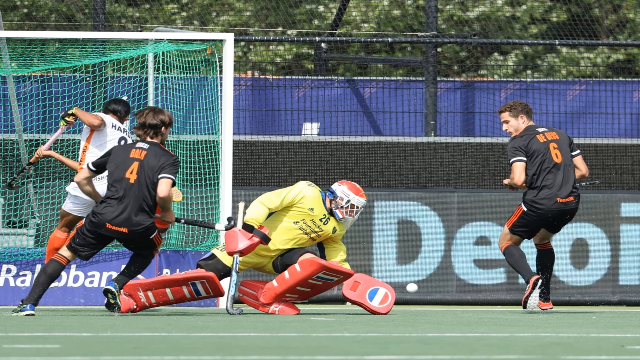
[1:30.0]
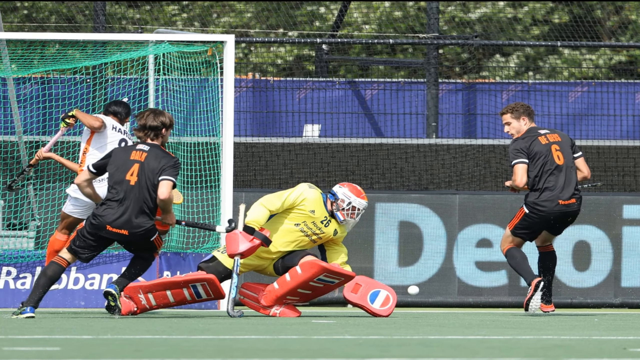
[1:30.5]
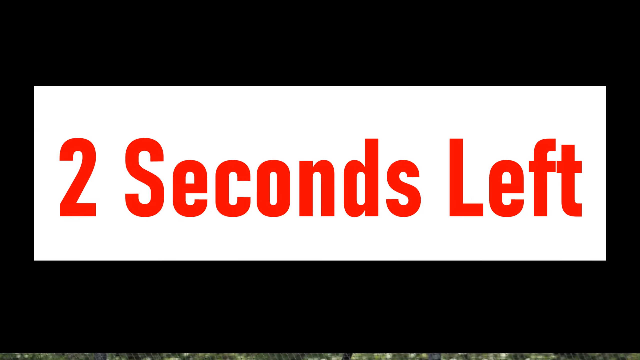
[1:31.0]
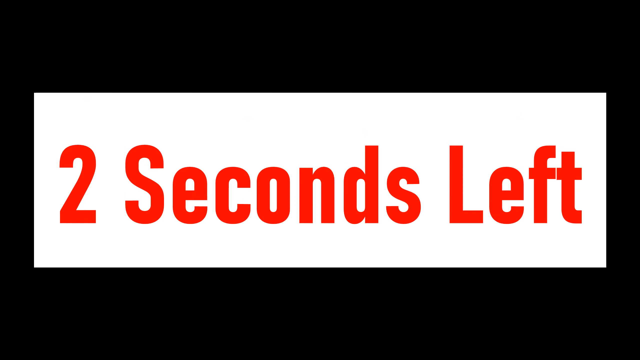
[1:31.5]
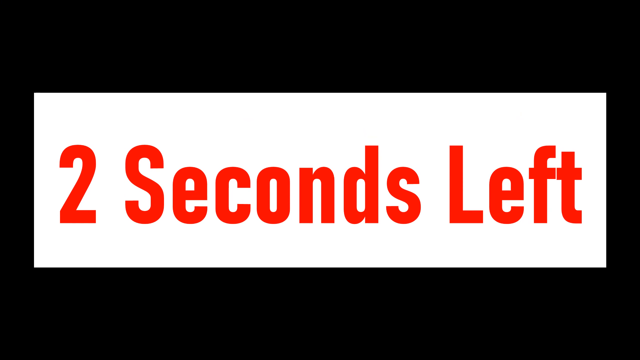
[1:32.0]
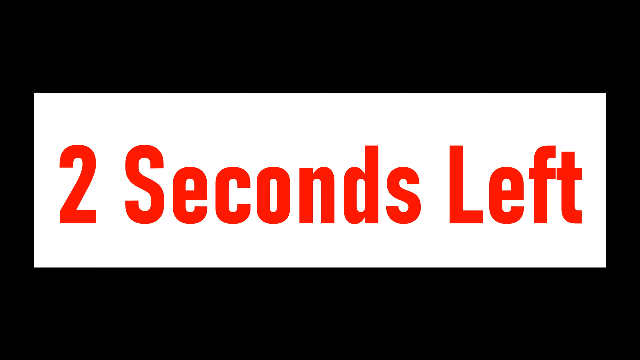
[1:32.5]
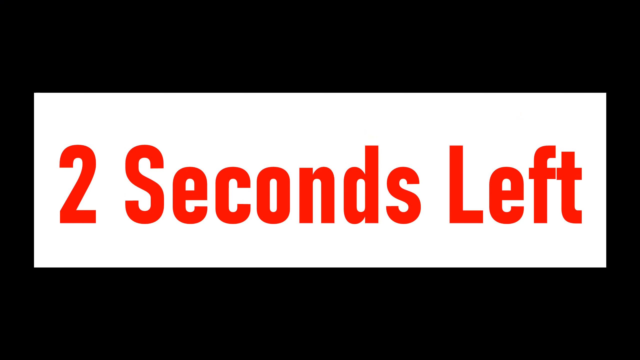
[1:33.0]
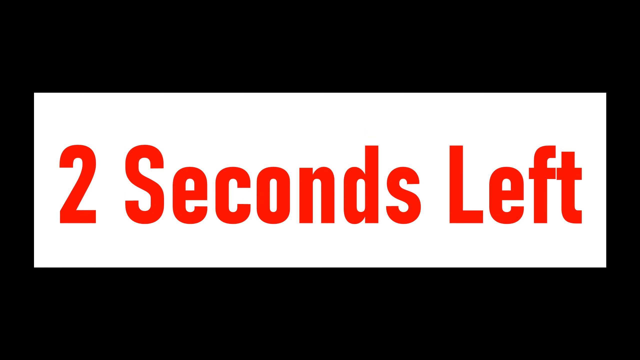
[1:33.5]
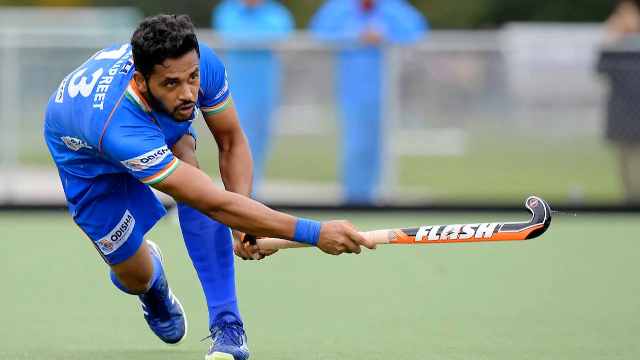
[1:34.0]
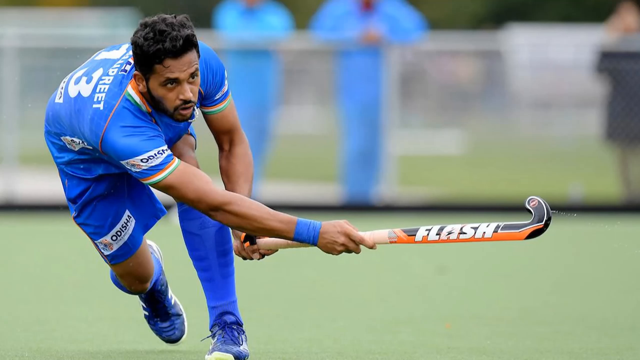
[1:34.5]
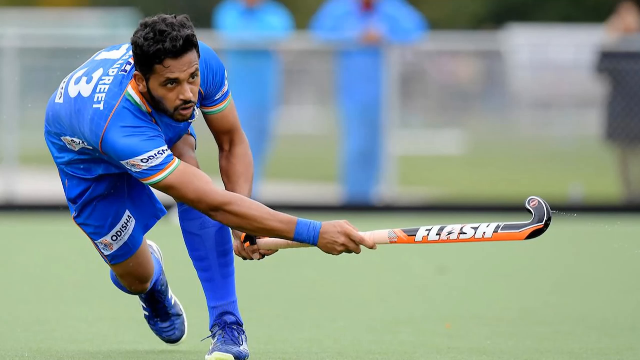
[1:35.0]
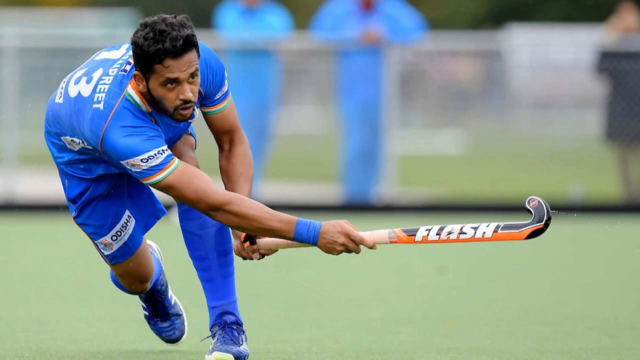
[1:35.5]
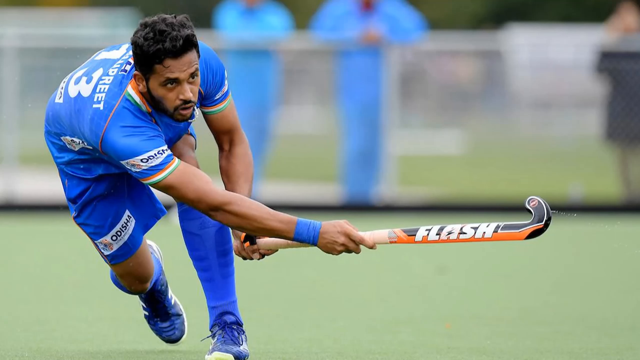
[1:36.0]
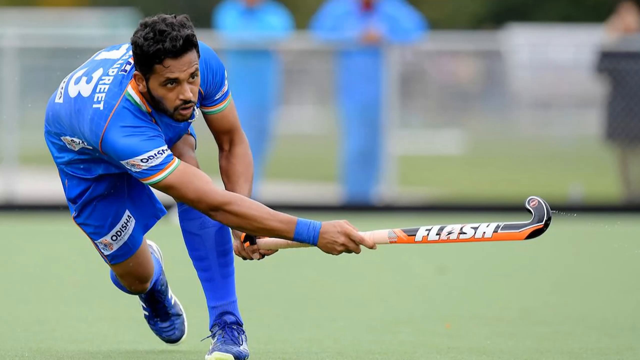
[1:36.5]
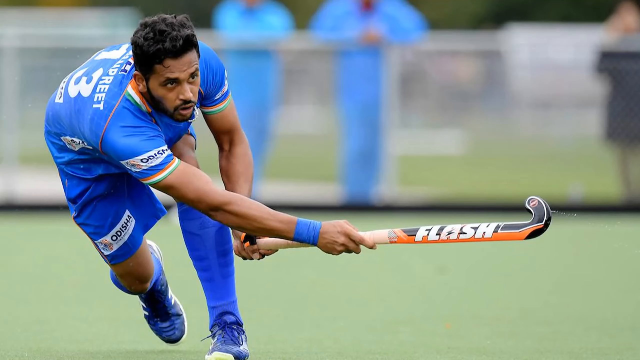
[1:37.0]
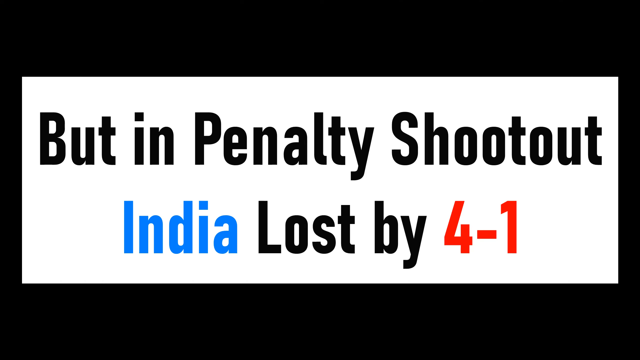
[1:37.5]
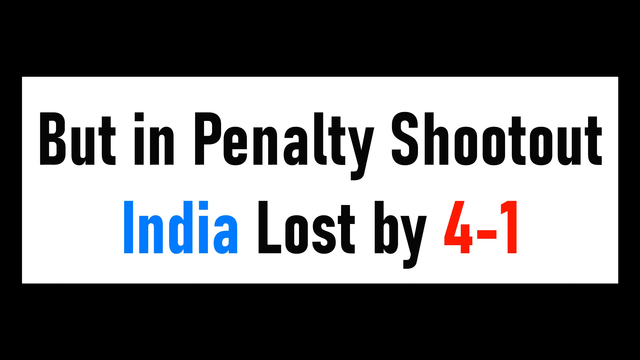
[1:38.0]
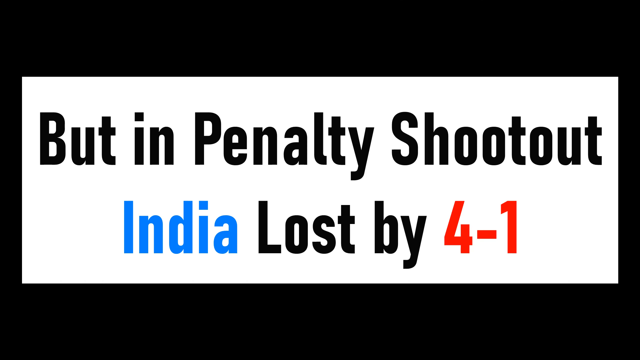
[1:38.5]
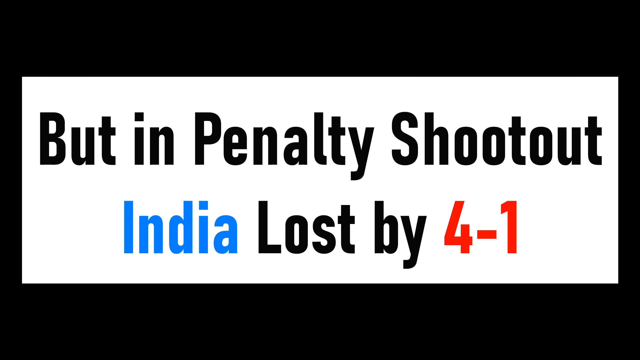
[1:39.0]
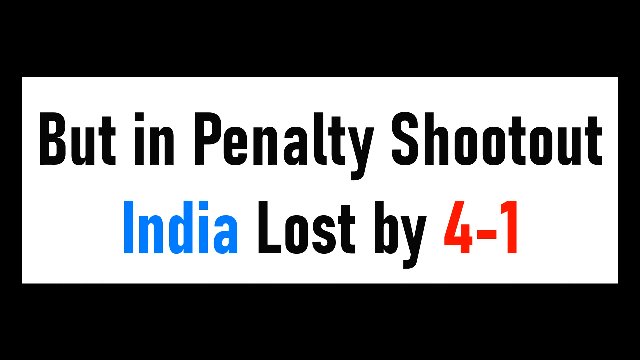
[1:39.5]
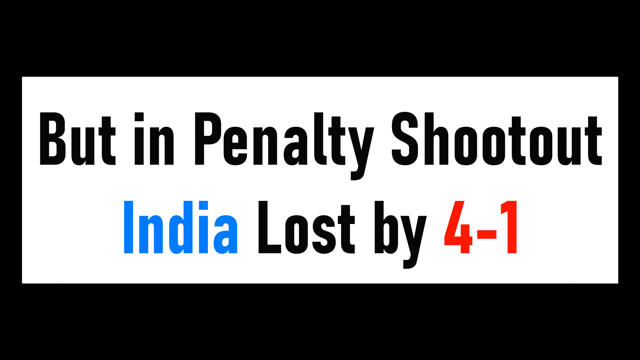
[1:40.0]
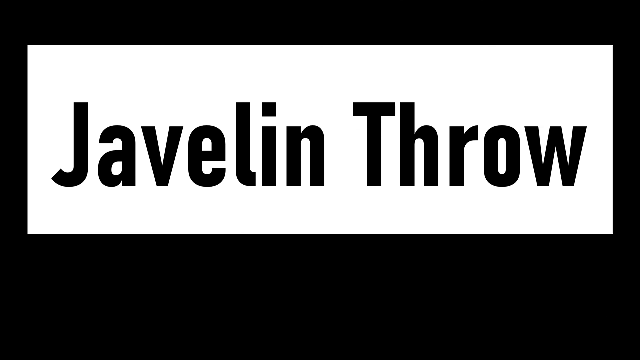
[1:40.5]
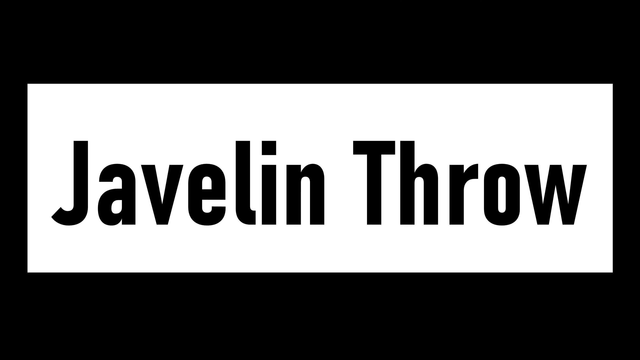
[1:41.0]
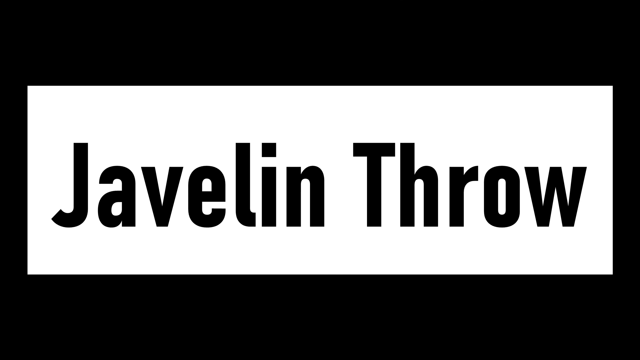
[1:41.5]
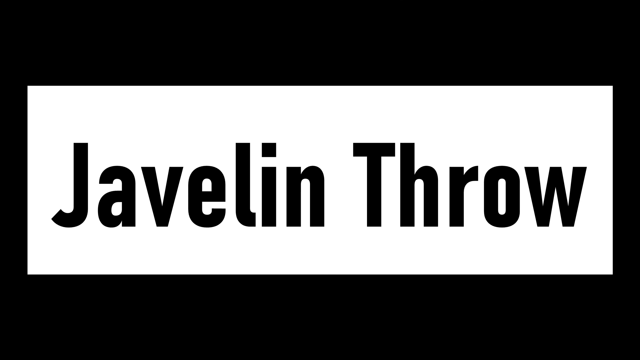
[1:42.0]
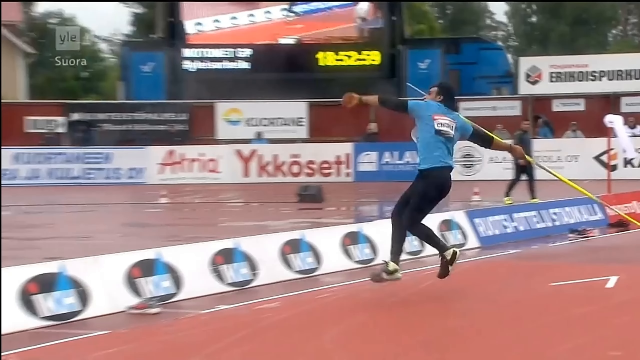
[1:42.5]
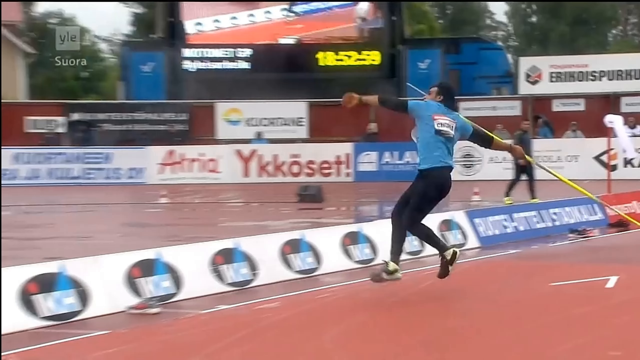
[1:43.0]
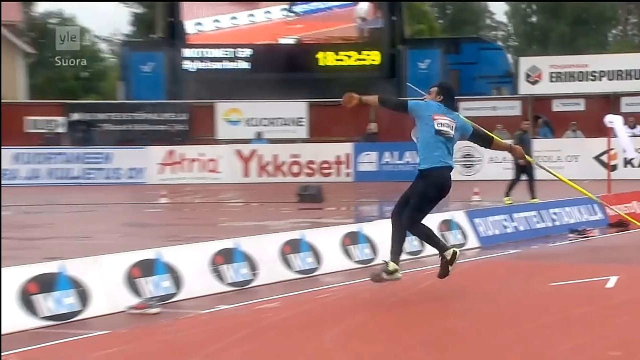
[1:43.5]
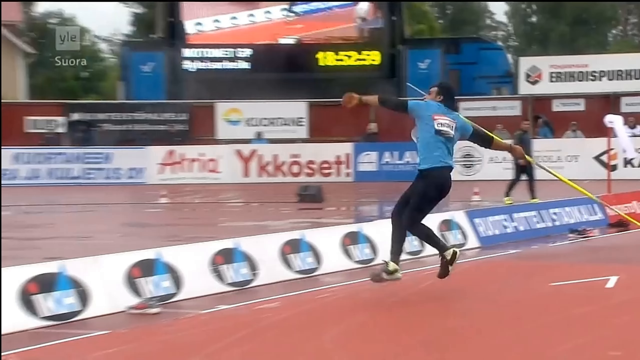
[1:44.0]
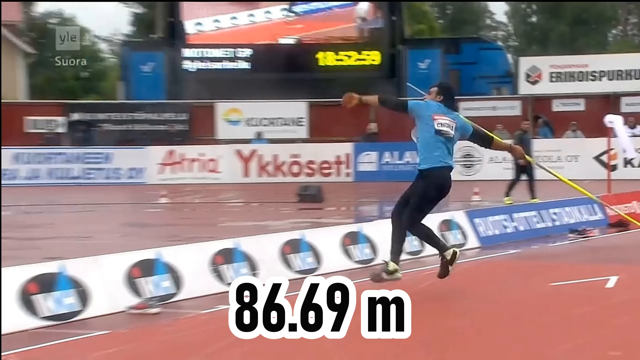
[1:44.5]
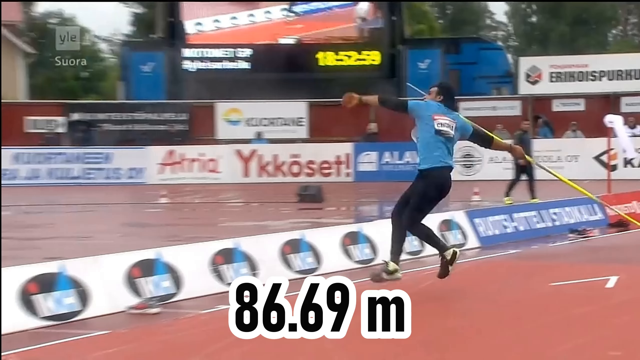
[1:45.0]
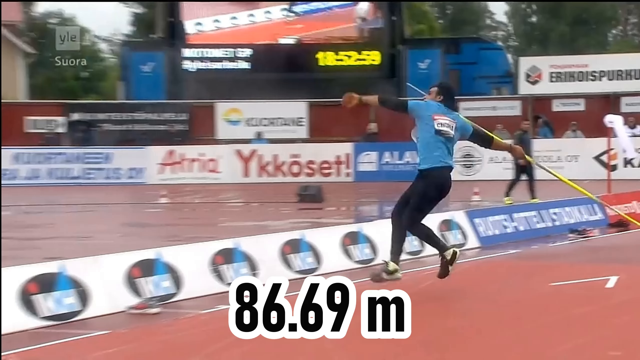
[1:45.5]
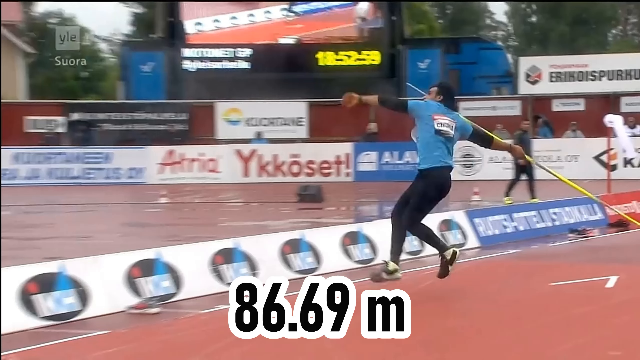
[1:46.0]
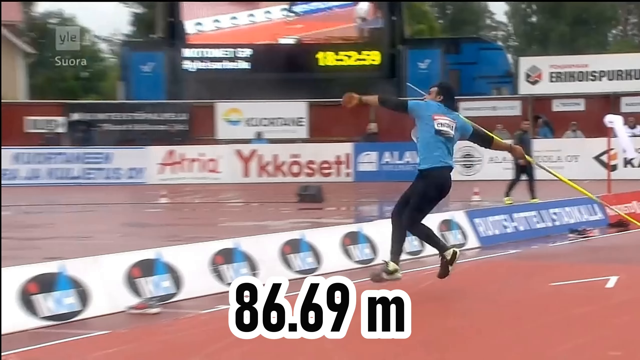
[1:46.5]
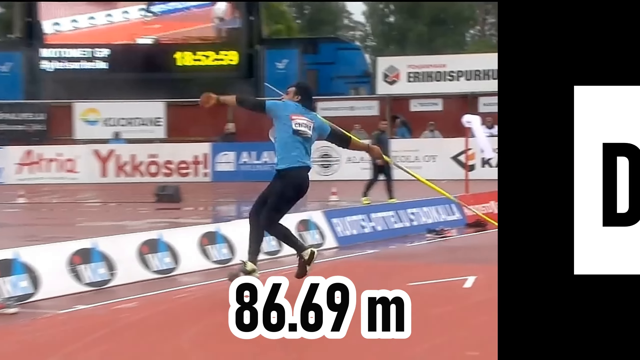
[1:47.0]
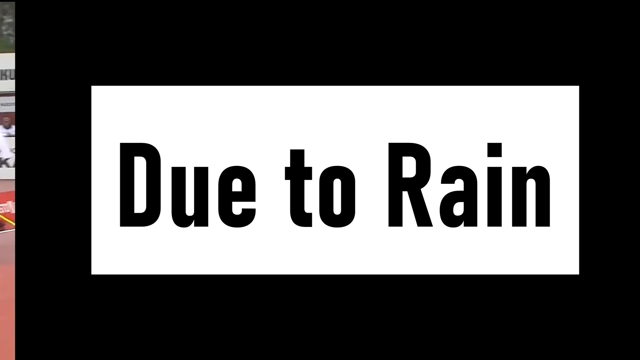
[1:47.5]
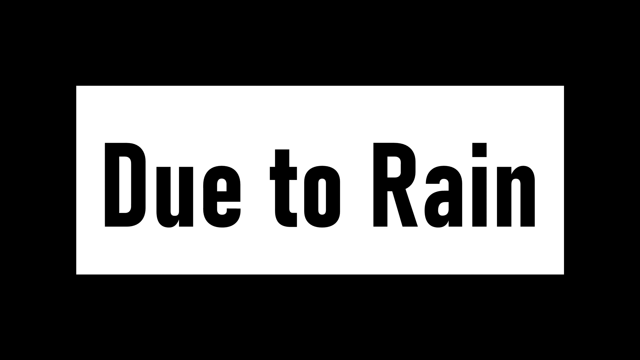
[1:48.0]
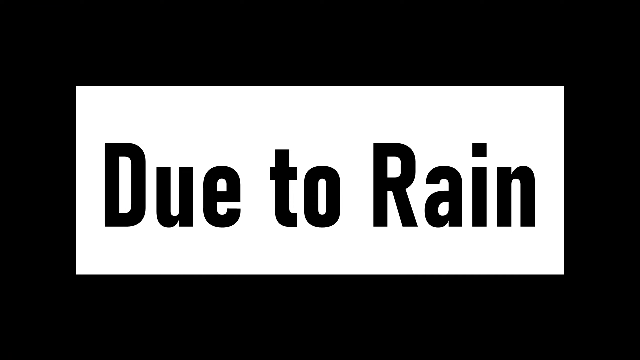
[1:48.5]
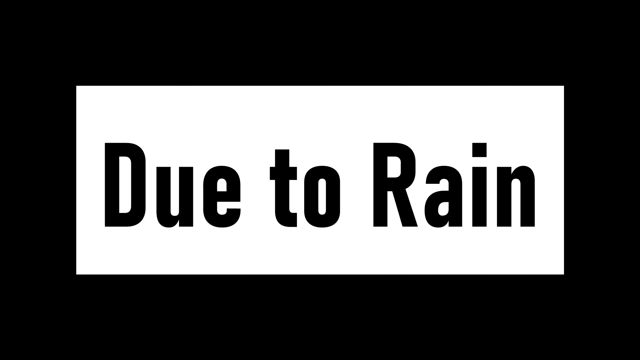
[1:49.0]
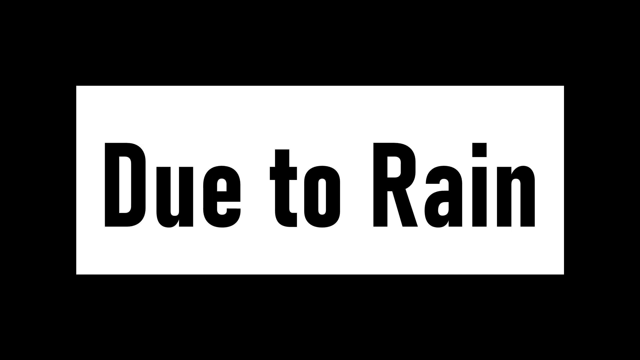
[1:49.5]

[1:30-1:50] Text reads "Welcome to Sports Affairs, get all the sports updates", then "click on your favorite timestamps to watch your favorite sports", "Hockey thrillers", "IND men versus Netherlands", "IND women versus Argentina" and "Both matches". A group of women in blue jerseys stands in a huddle. A name flashes up on the screen, and then women play a rough game of field hockey as text reads "Gurdjieff scored at 36th minute", followed by "Match drawn. Penalty shootout. India won by two to one. Neha and Sonako." and "Argentina, Granado, Victoria". A picture shows the women's team in blue and white striped jerseys. The view flashes to a men's field hockey team celebrating something, then men playing a sport on a field. They wear helmets, and some wear white caps on their heads. There appears to be a heavily padded goalie with big blue pads on his legs and a helmet. The sticks look wooden, and all the men appear to wear shin guards.